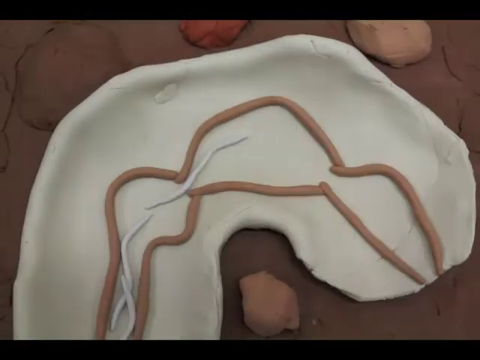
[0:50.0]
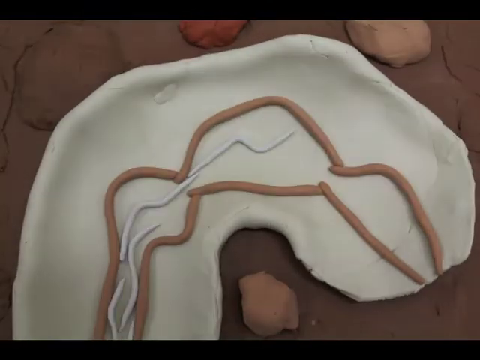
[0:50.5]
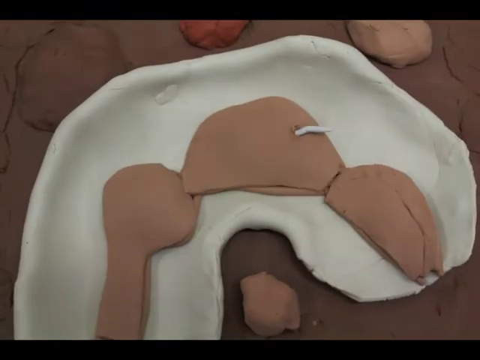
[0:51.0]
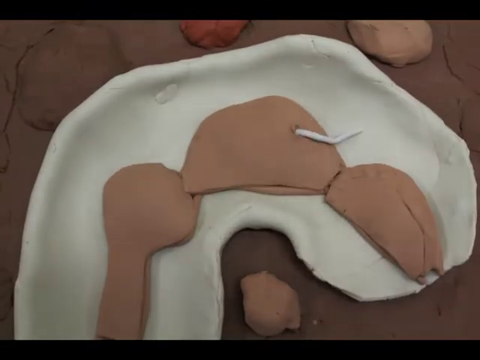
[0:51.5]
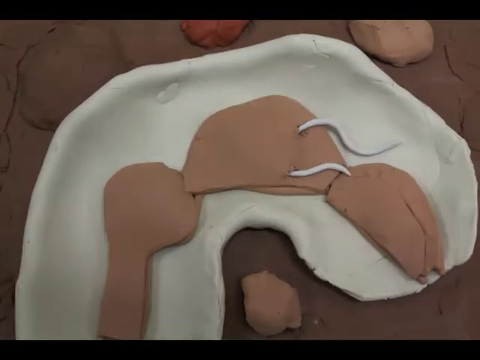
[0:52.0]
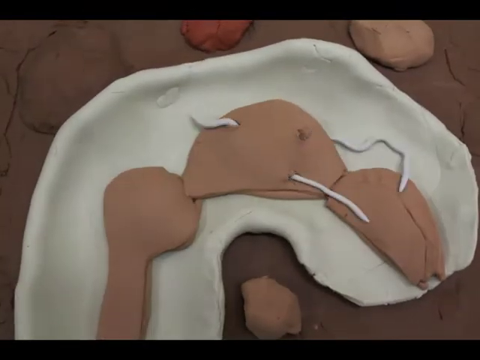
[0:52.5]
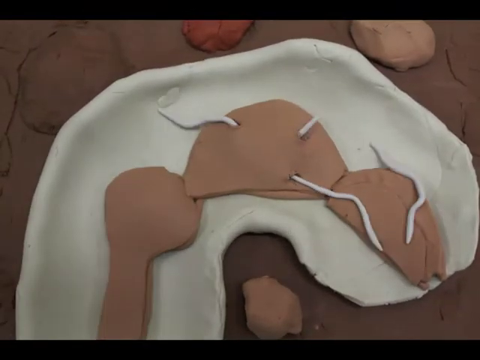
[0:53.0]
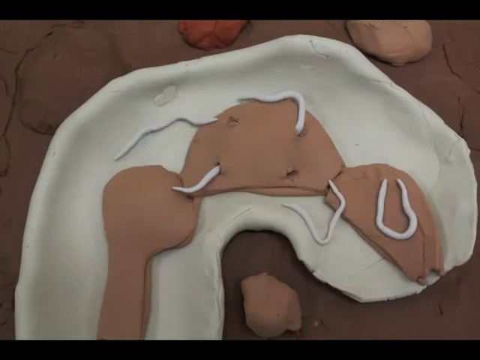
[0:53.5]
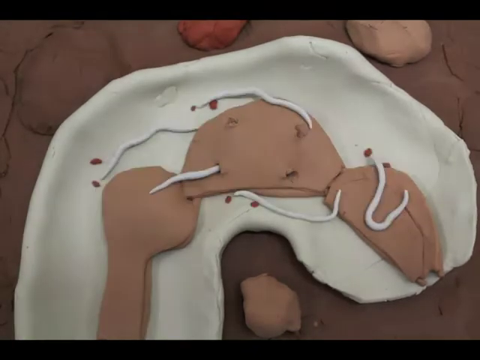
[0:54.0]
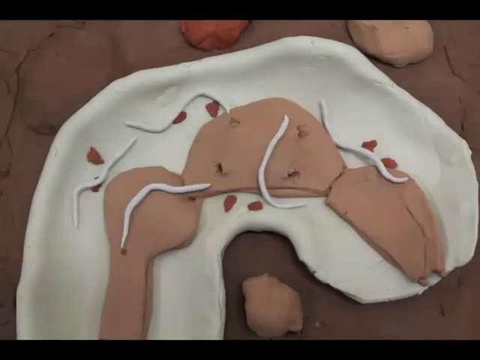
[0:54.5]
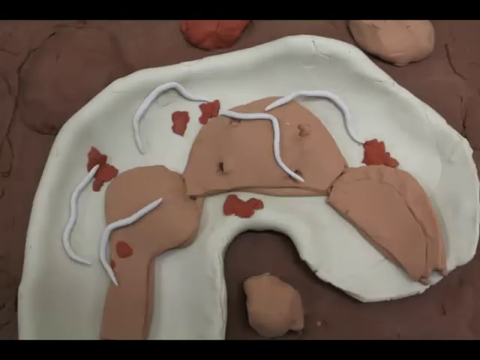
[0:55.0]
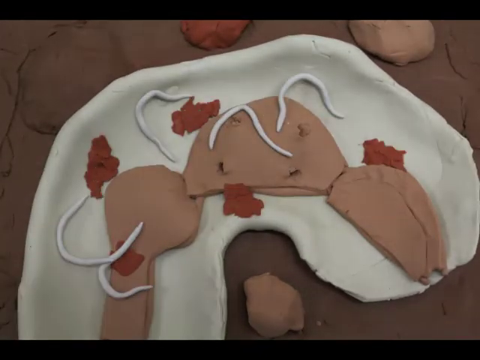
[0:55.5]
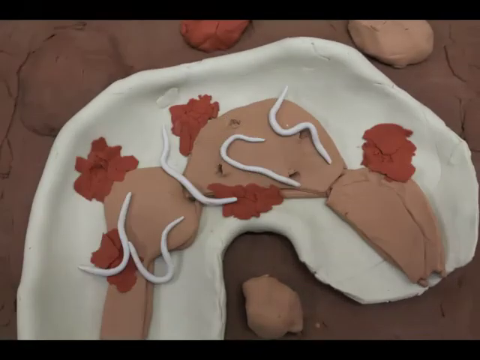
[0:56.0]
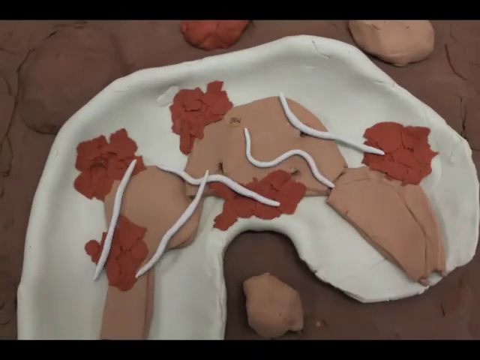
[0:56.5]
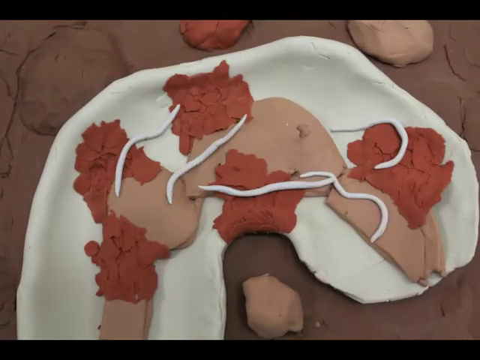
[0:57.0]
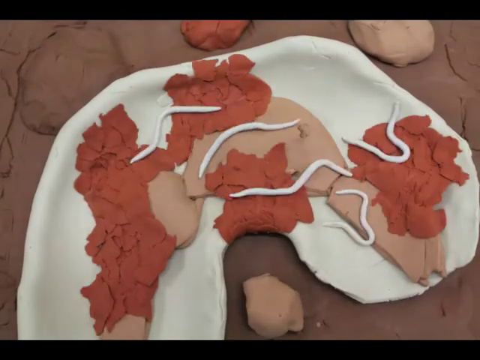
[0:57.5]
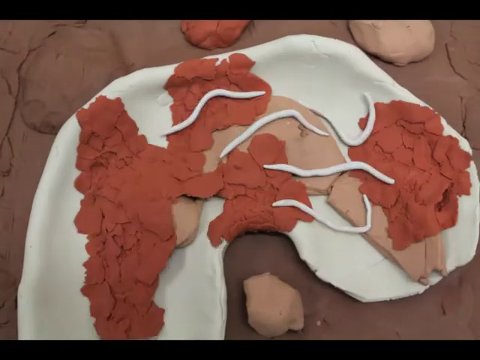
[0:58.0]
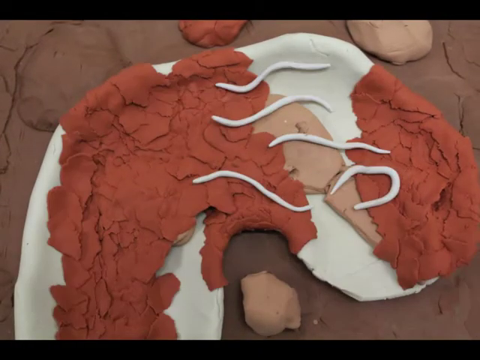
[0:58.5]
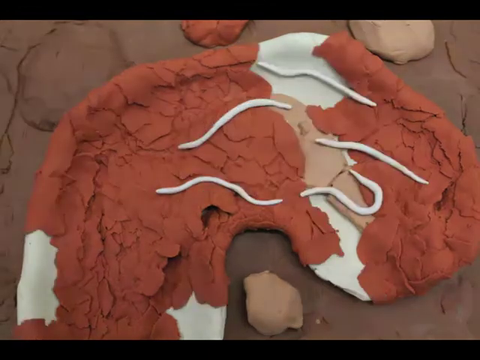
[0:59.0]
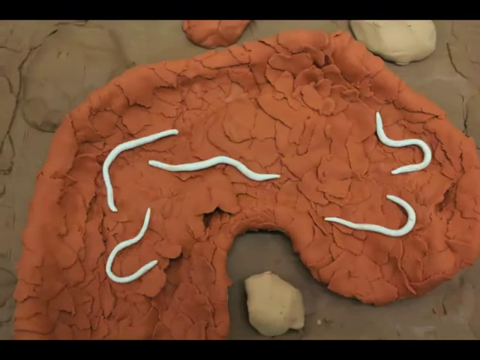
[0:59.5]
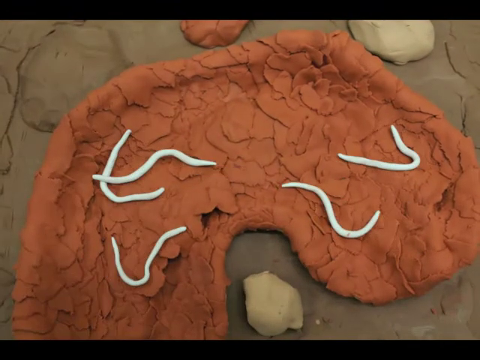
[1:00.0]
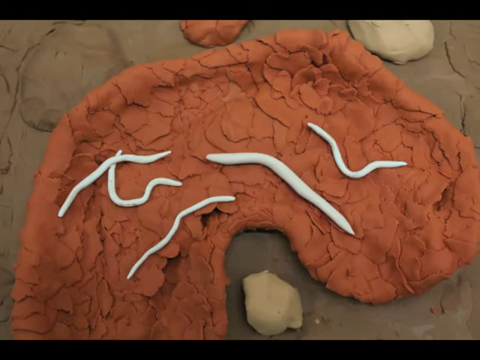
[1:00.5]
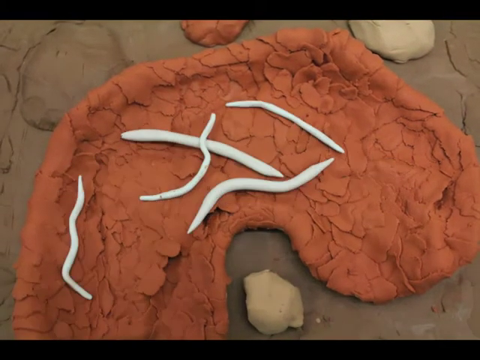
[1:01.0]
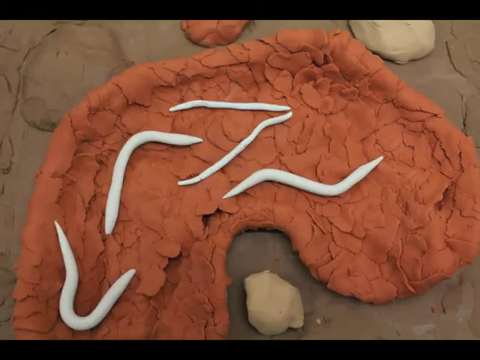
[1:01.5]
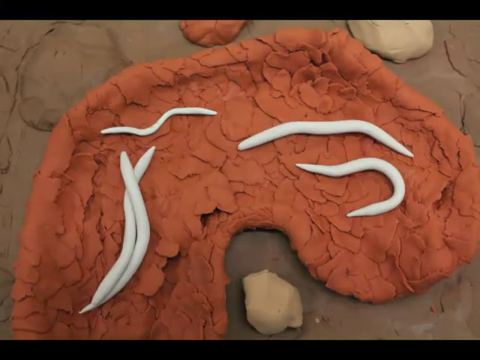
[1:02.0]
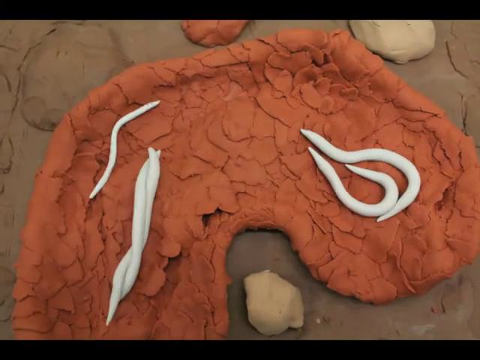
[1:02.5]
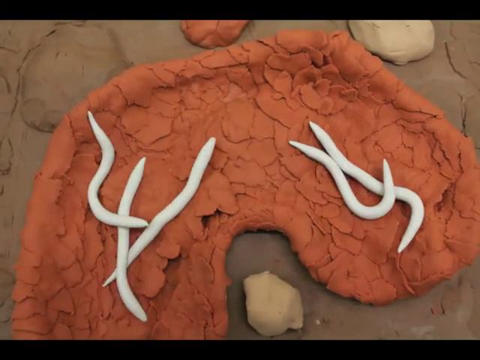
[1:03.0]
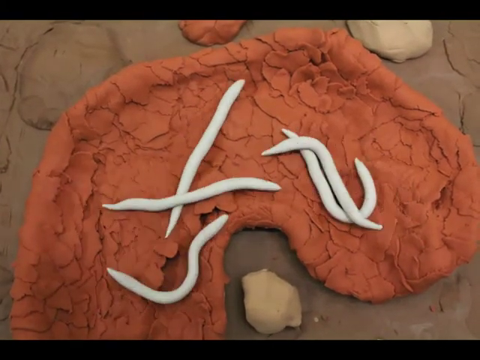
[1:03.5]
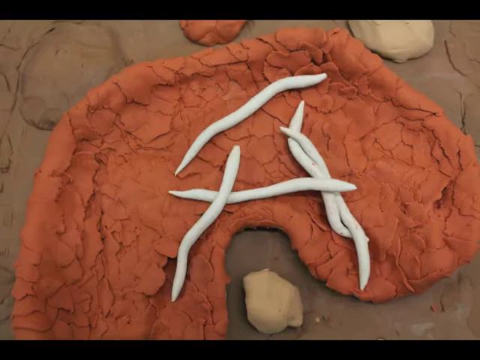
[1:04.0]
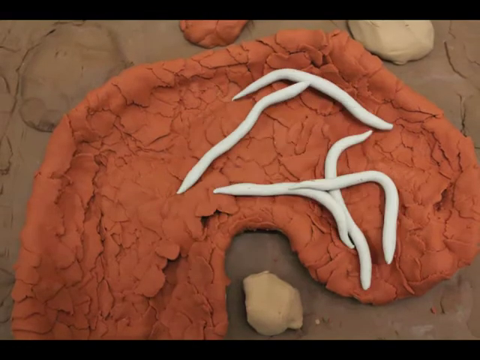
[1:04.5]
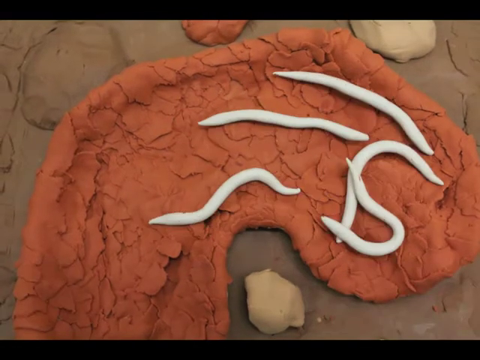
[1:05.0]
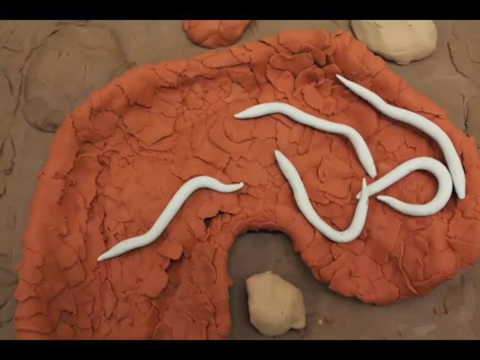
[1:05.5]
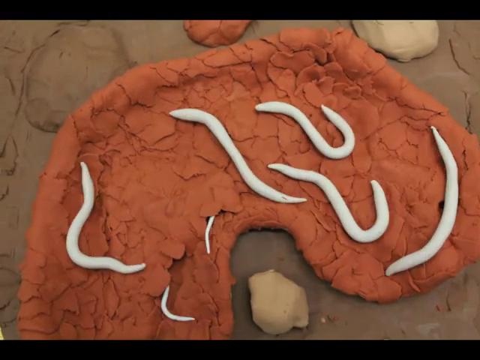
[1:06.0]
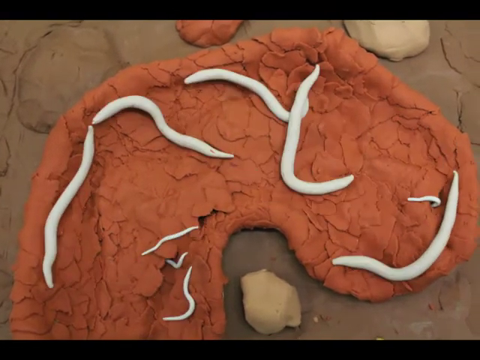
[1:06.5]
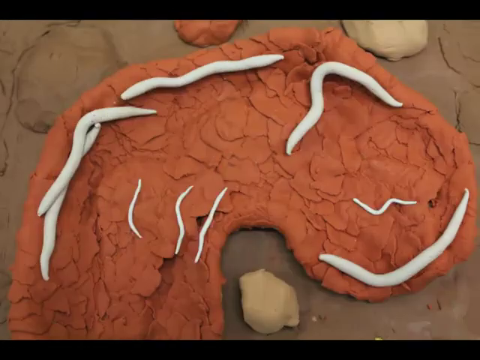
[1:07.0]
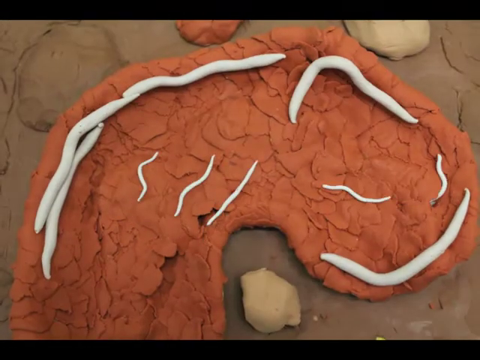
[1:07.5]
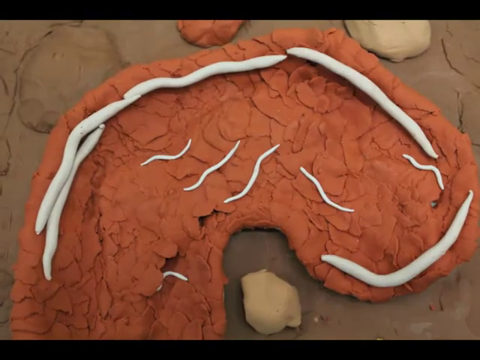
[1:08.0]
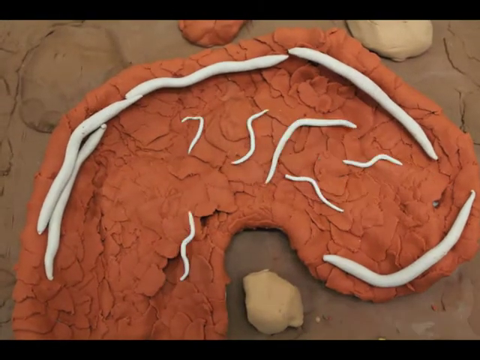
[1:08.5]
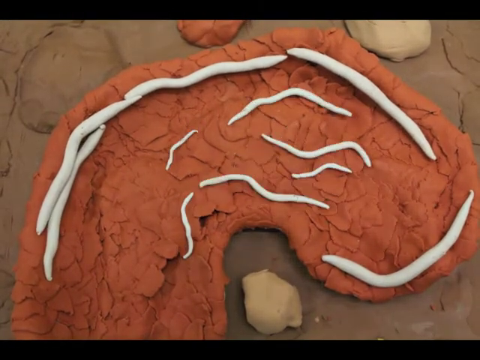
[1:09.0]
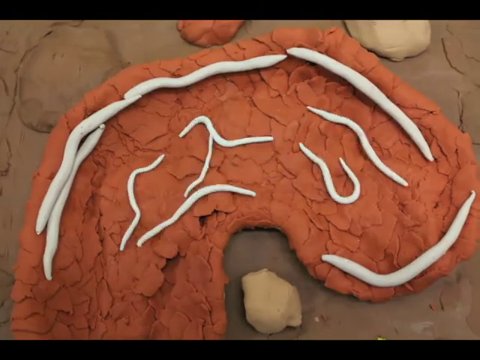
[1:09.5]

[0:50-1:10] What seems to be the digestive tract of the larger larva is shown. The worms, made of white clay, at first jiggle through the digestive tract, then puncture the stomach and digestive tract and climb out into the larva's body. An orange clay covering over the larva's body then represents the worms consuming and digesting the body. The smaller worms seem to have laid eggs inside the host's body, which apparently hatch, with young worms coming out of the dead larva, seemingly showing a sort of circle of life.